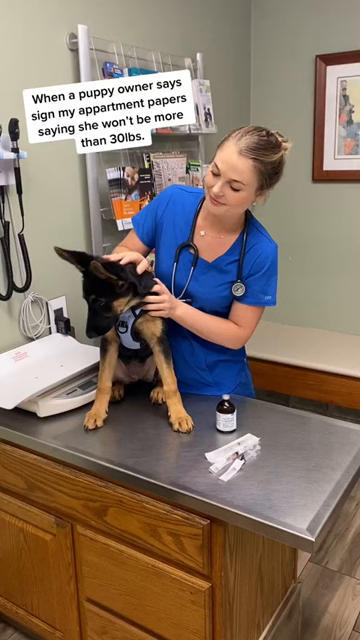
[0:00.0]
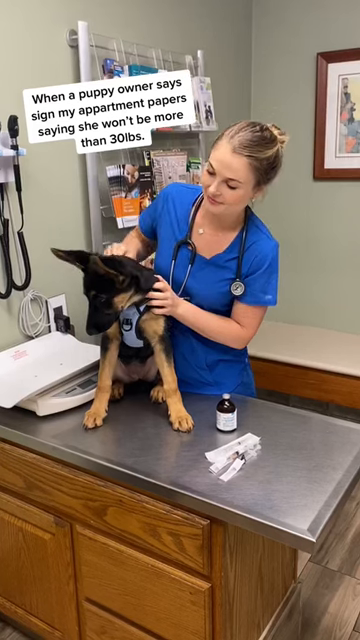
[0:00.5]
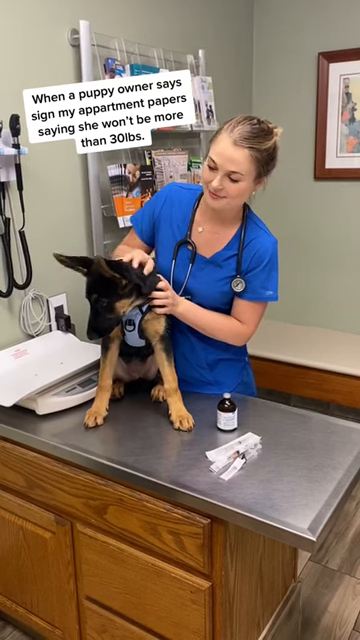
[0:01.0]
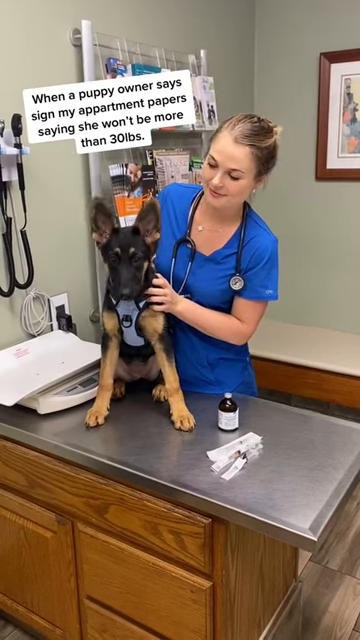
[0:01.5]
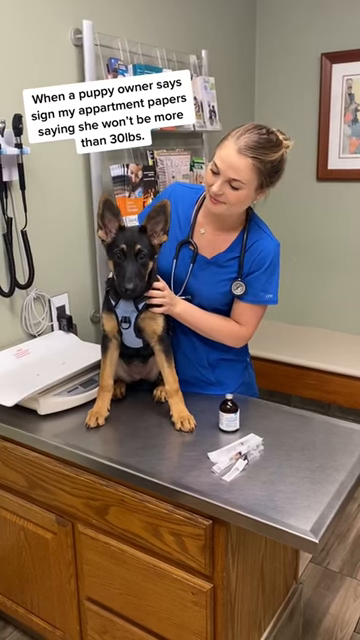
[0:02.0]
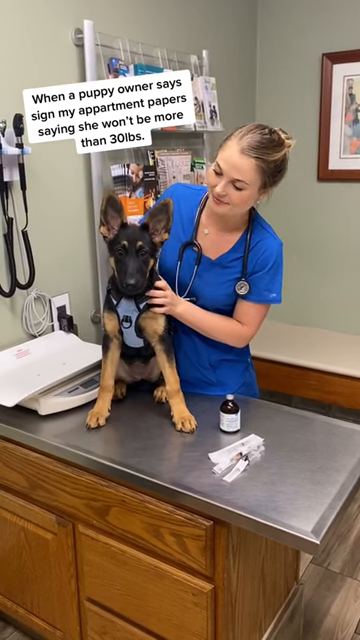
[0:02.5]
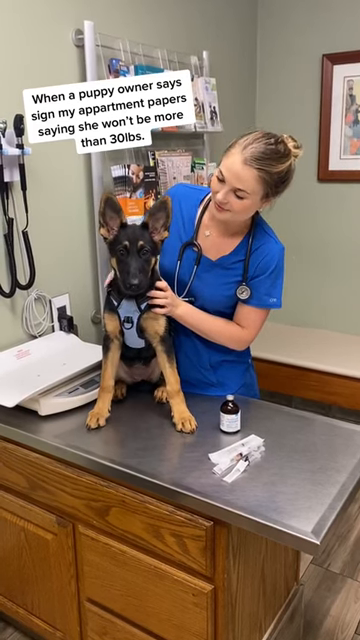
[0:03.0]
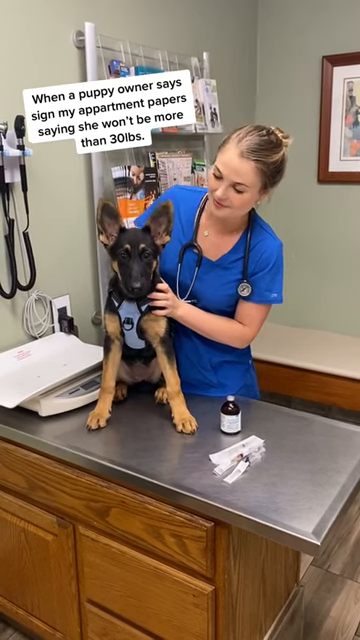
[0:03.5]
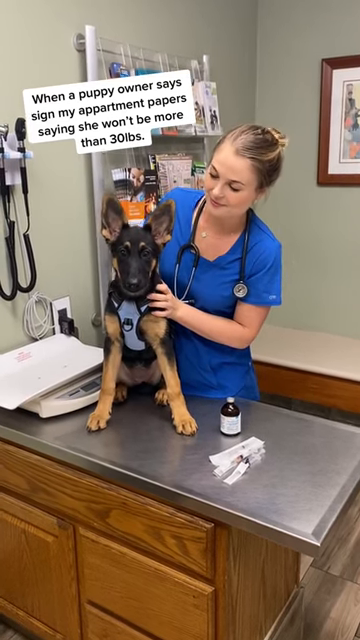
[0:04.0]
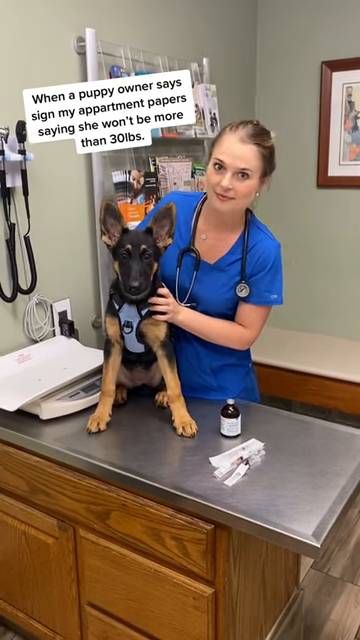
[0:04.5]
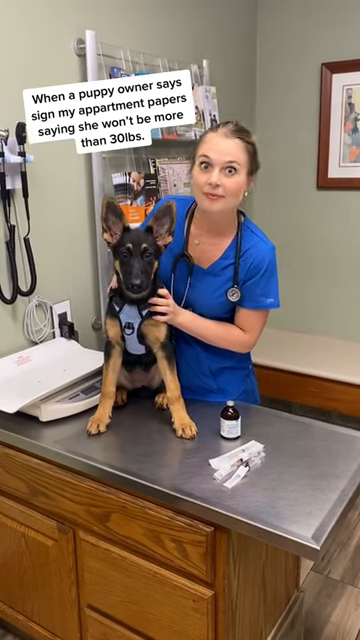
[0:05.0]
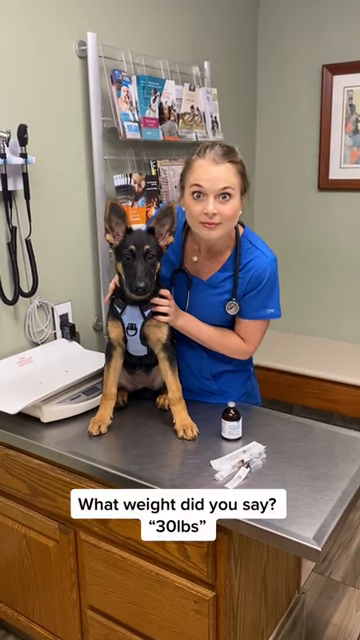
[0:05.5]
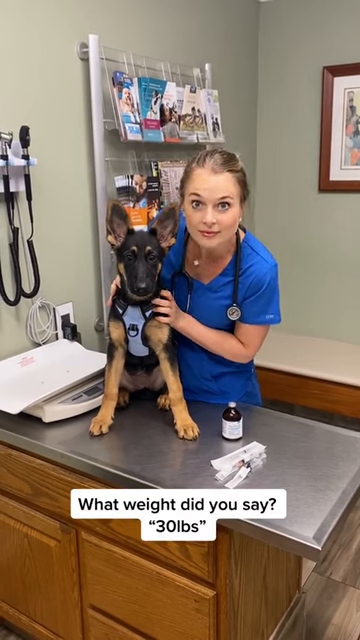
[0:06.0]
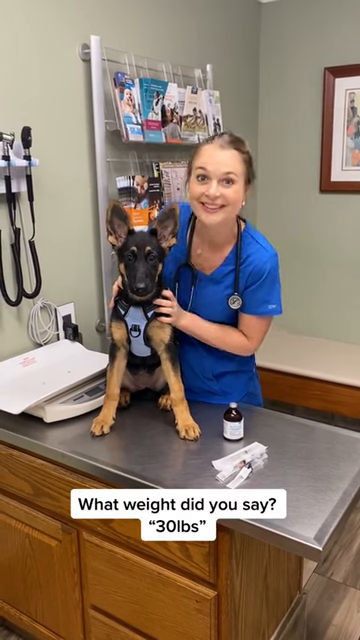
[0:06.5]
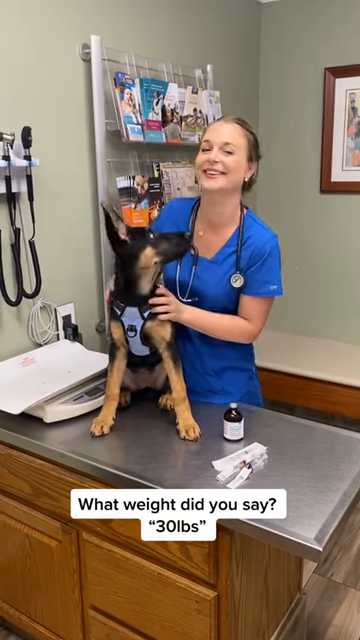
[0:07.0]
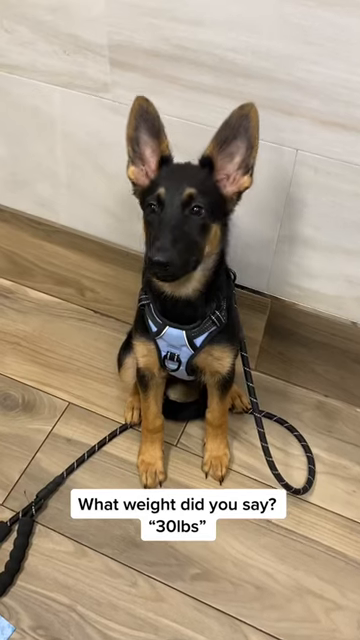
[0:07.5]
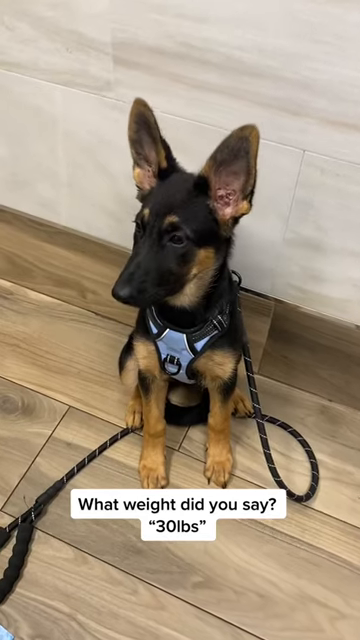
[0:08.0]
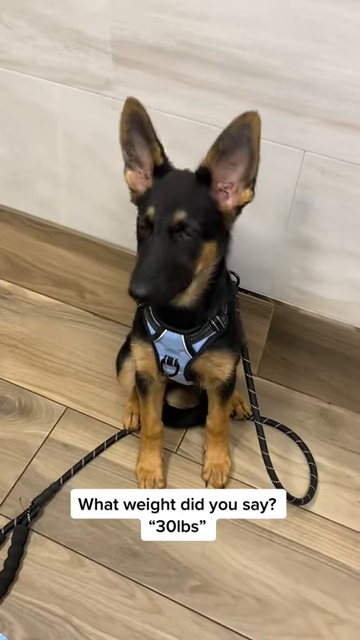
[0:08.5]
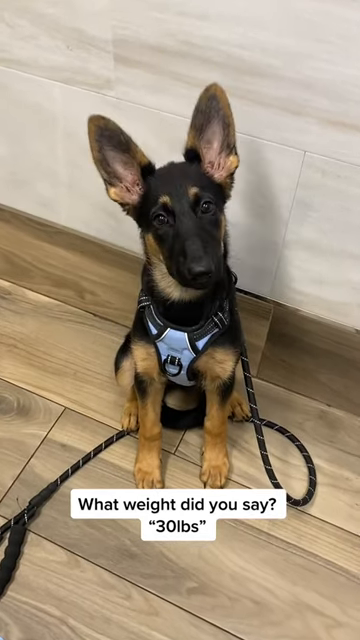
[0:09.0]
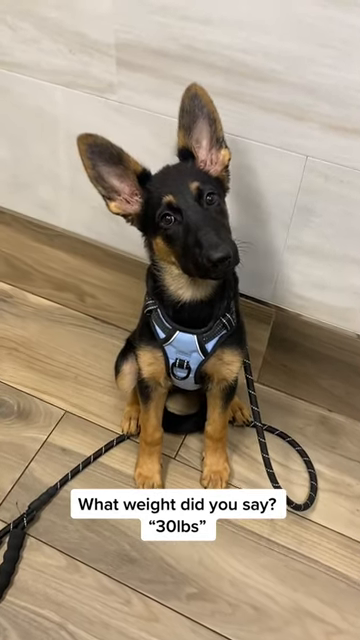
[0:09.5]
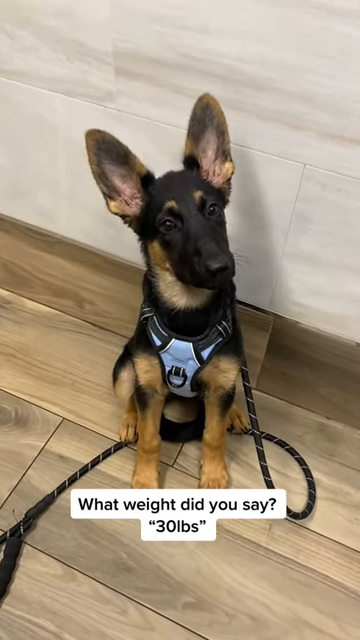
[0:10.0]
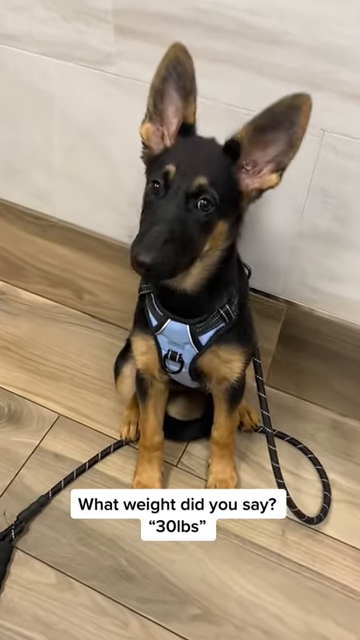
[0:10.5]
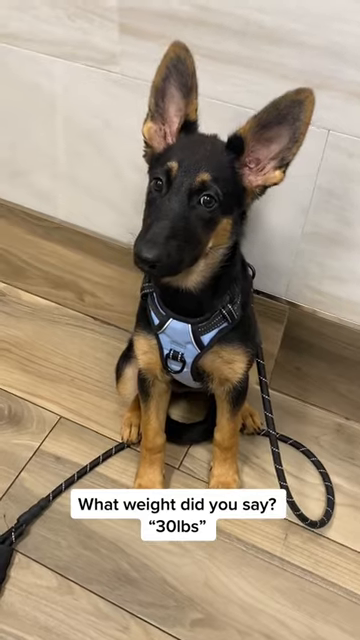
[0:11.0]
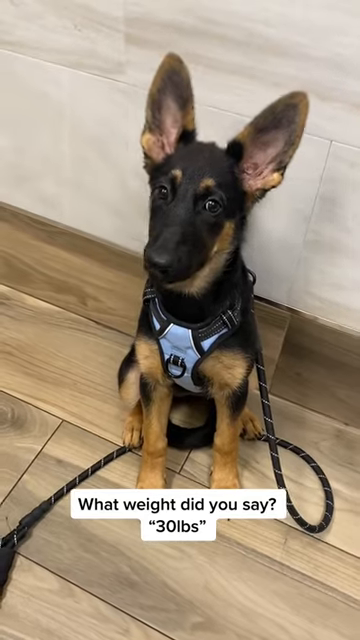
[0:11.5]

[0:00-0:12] Two main subjects are shown: a German Shepherd and a veterinarian. The veterinarian wears scrubs with a medical tool around their neck, and the dog wears a vest. The veterinarian examines and touches the dog while the dog looks around the room. The veterinarian makes various facial expressions, which relate to text about a puppy owner asking for apartment papers to be signed saying she won't be more than 30 pounds; the veterinarian's expressions show uncertainty, suggesting the dog will actually be over 30 pounds.